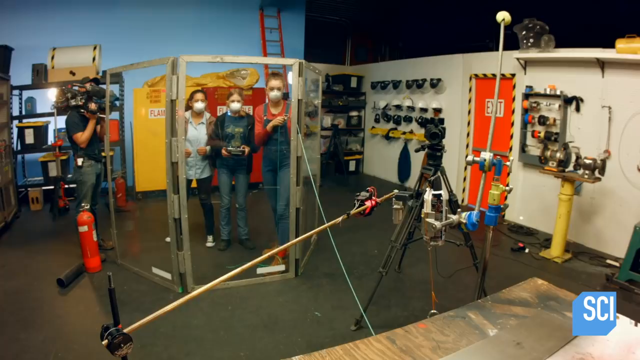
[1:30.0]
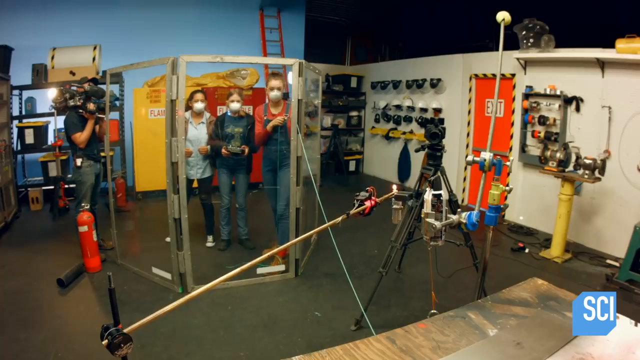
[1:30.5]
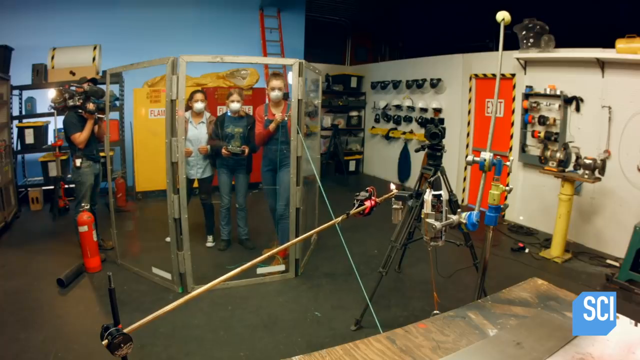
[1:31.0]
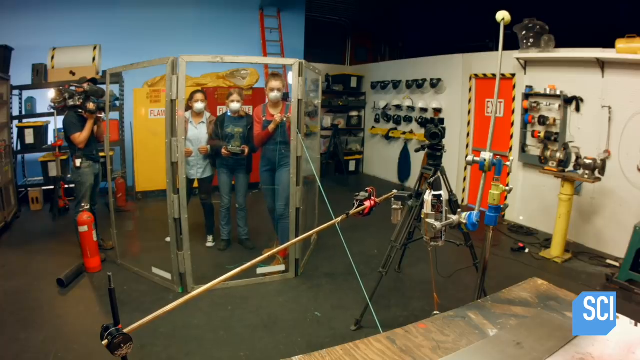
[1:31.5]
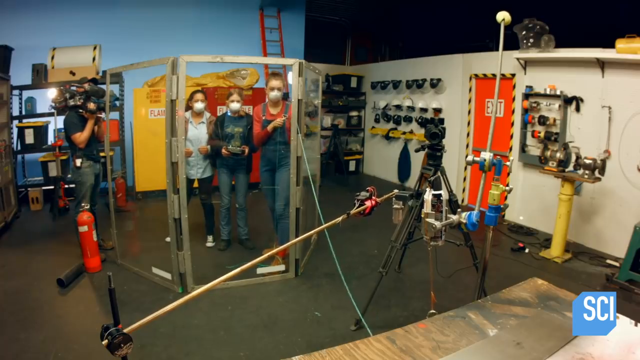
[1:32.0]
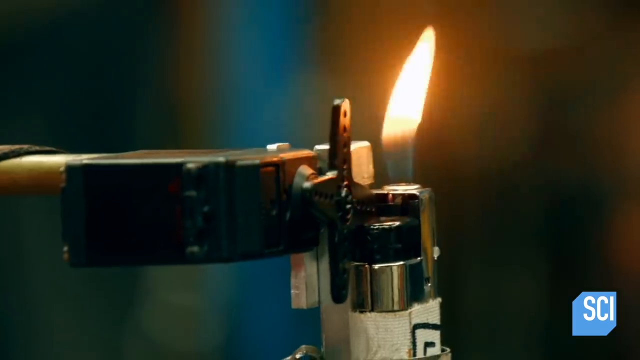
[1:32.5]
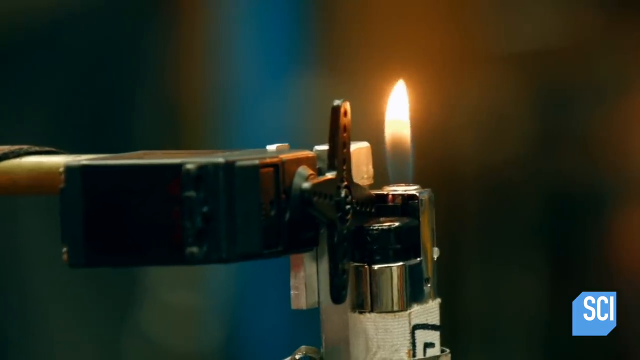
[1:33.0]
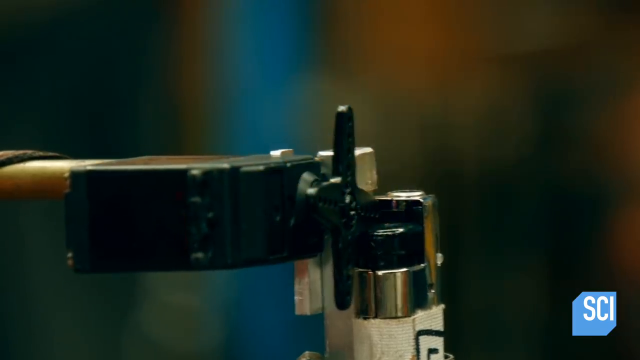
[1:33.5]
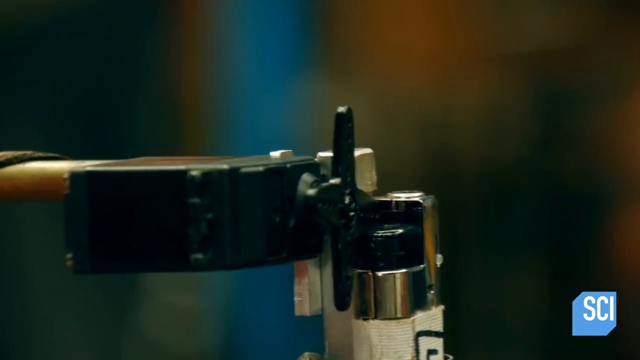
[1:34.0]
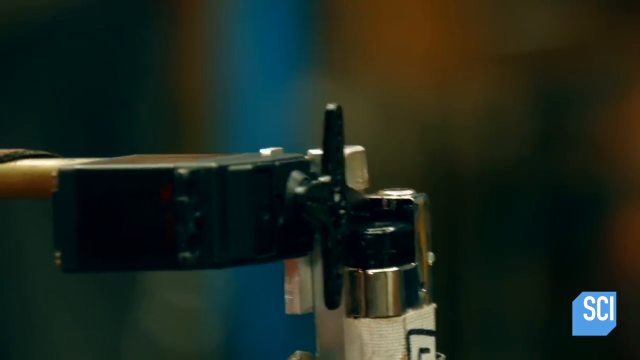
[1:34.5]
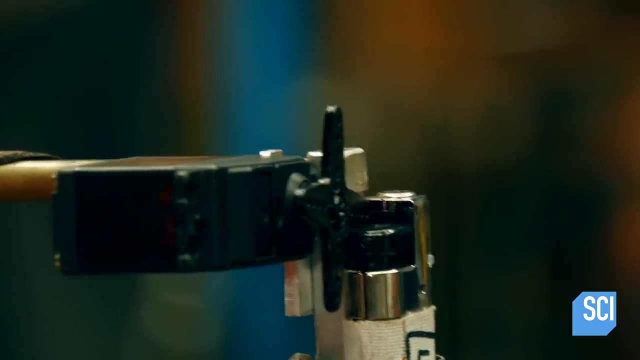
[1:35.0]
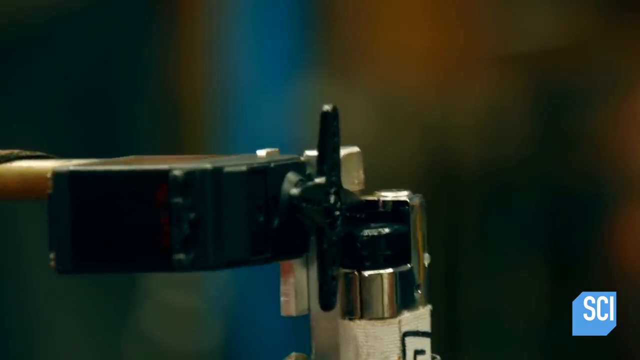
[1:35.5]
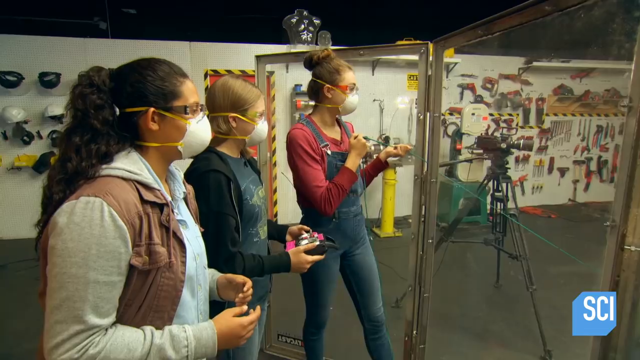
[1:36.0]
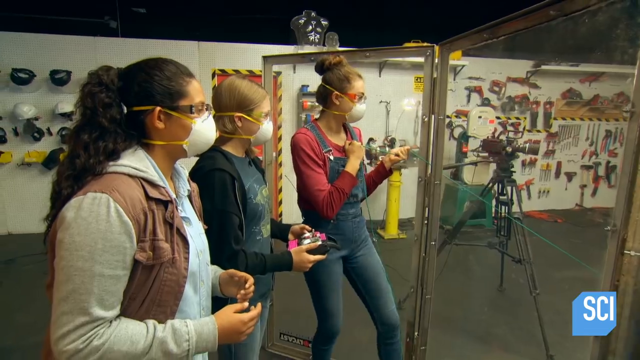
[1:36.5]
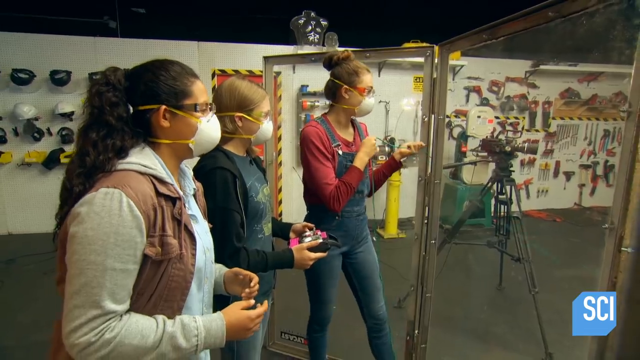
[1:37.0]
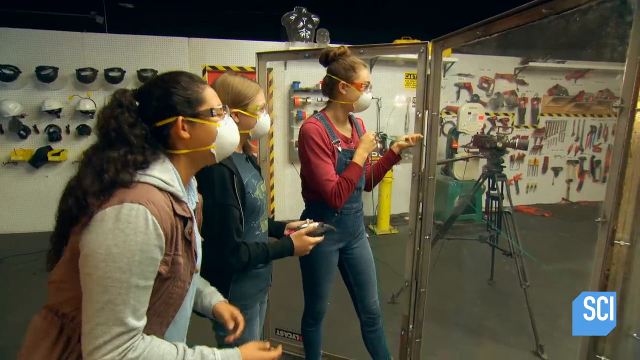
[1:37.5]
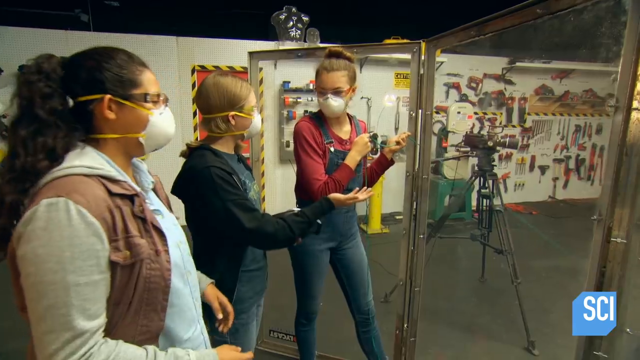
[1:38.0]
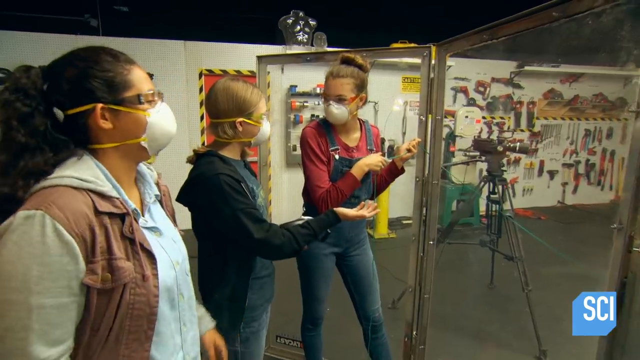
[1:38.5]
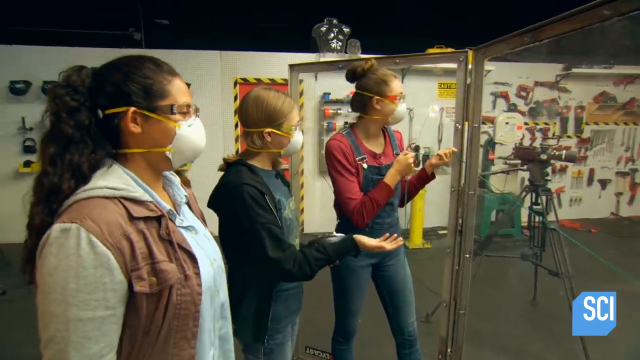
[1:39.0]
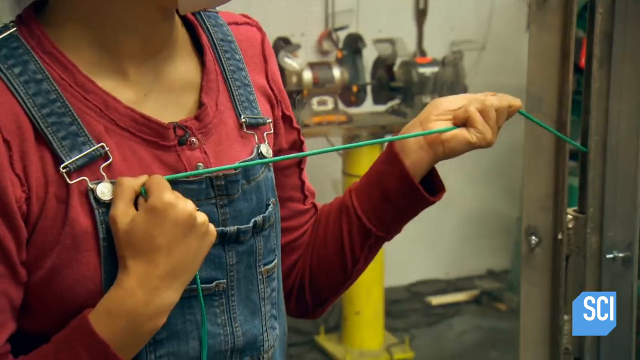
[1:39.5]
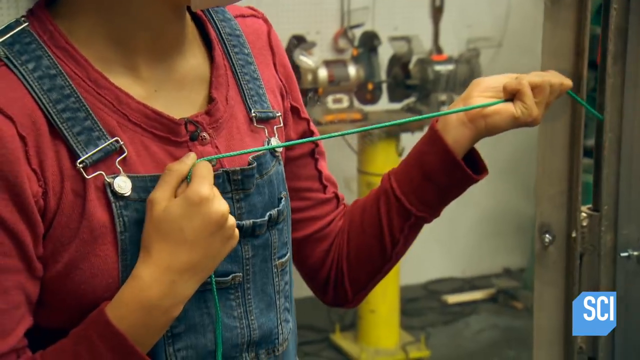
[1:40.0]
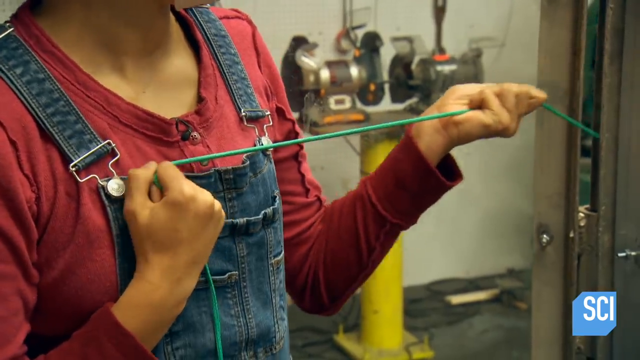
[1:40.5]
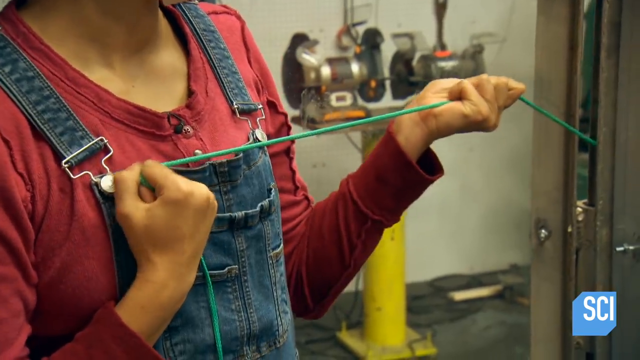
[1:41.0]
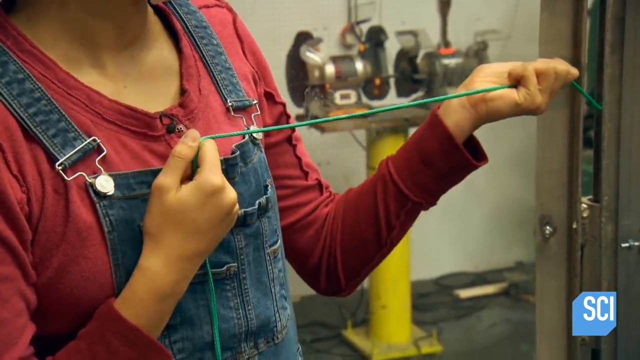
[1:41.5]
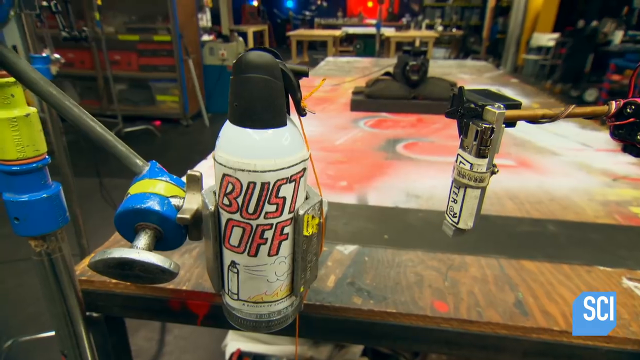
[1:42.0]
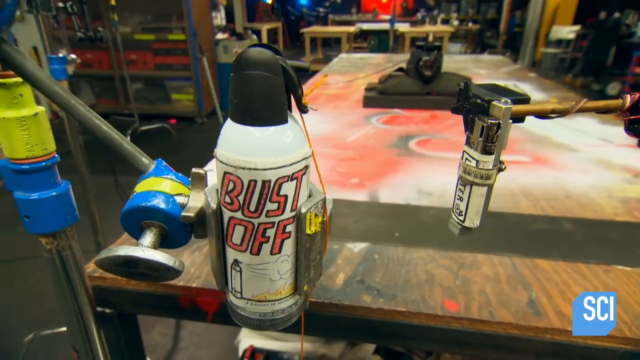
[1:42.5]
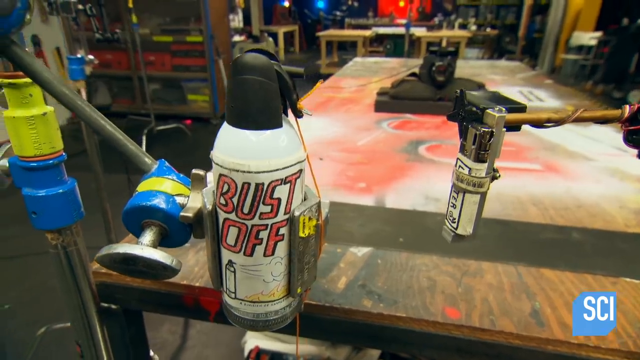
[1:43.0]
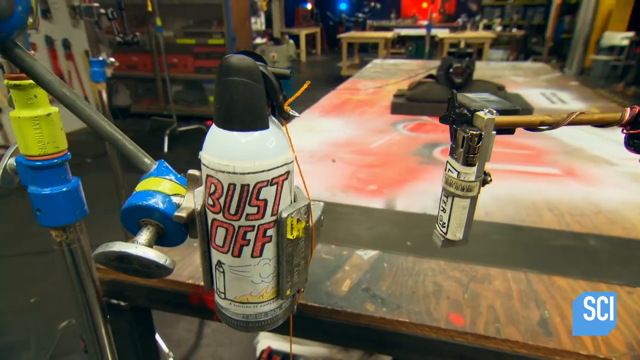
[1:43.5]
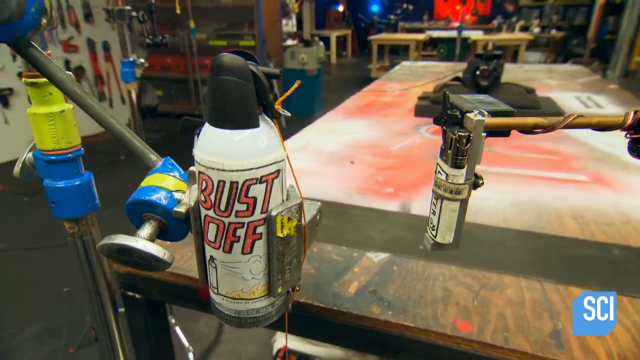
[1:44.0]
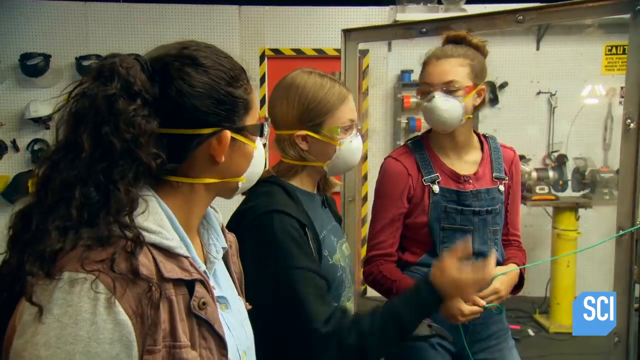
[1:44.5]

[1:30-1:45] In a workstation, a glass divider separates three teenage girls on one side from an experiment set up on the opposite side. The experiment consists of a bust-off compressed air can and a lighter. The lighter is turned on by a green string mechanism that one of the girls holds; when she yanks the string, the lighter turns on. Behind the glass safety area, the girls wear goggles, masks, long-sleeve shirts, pants and closed-toe shoes.